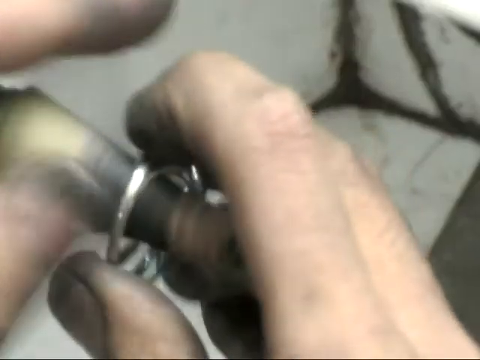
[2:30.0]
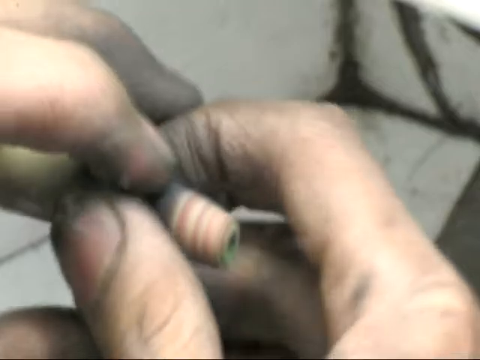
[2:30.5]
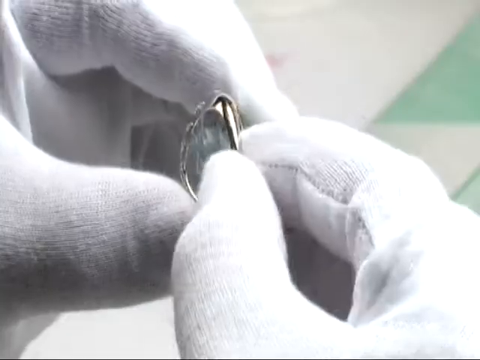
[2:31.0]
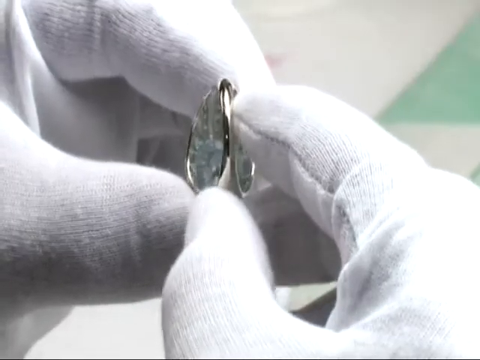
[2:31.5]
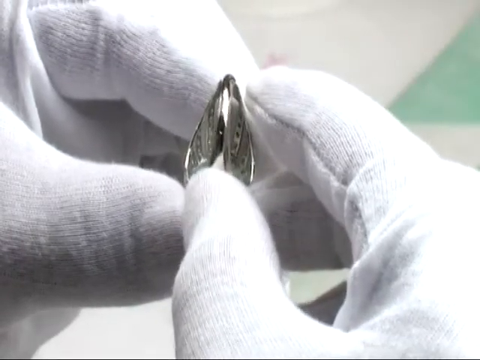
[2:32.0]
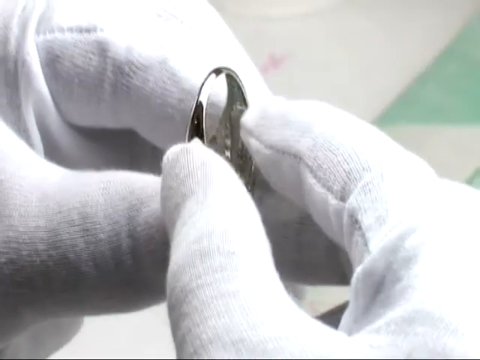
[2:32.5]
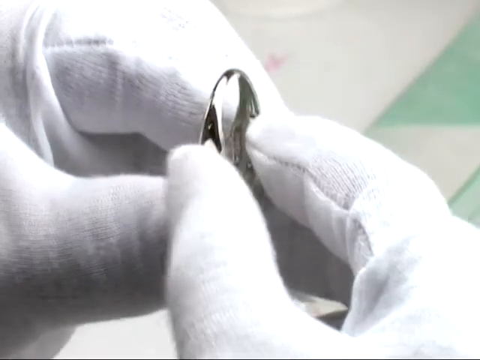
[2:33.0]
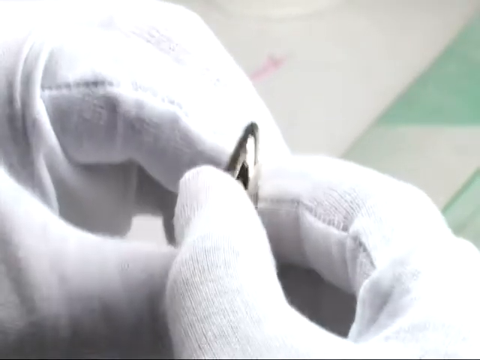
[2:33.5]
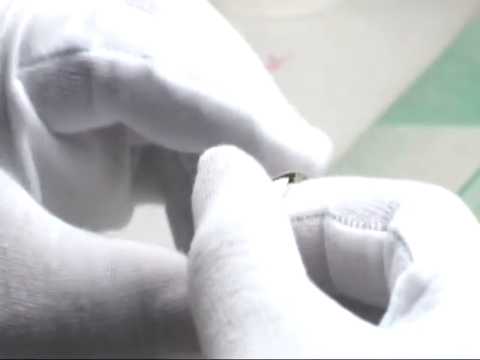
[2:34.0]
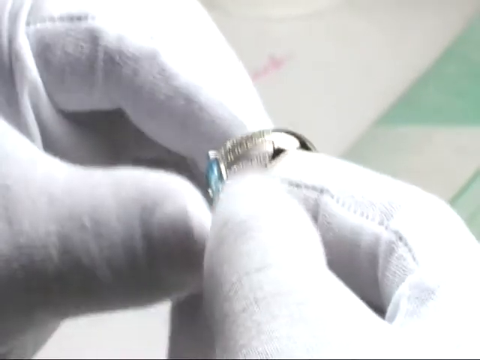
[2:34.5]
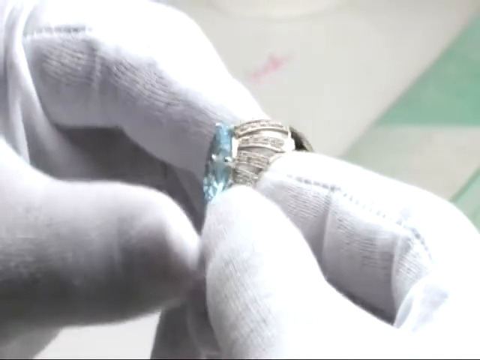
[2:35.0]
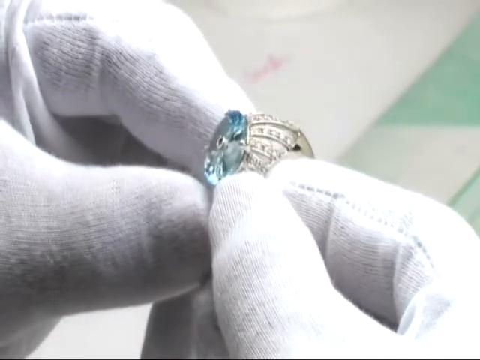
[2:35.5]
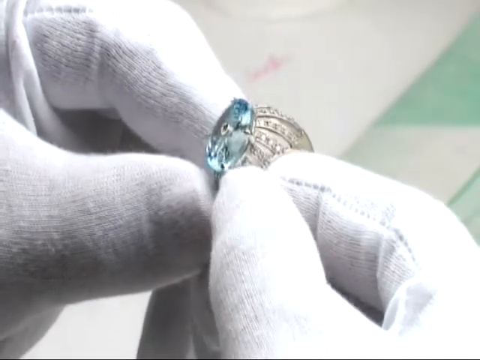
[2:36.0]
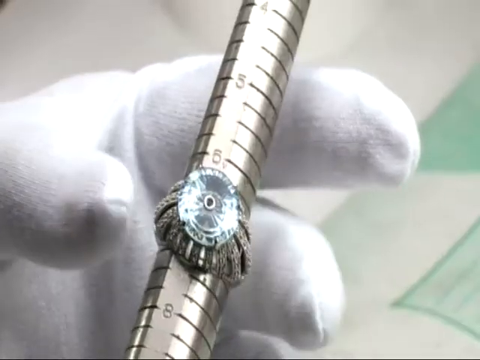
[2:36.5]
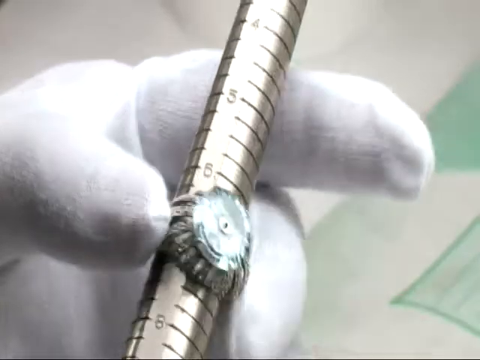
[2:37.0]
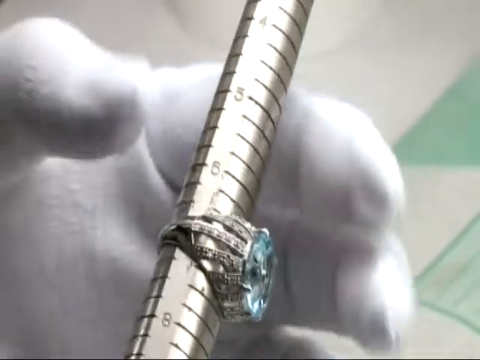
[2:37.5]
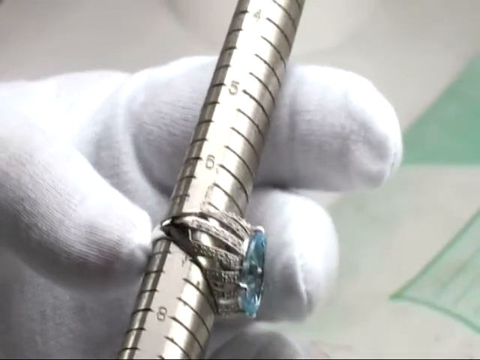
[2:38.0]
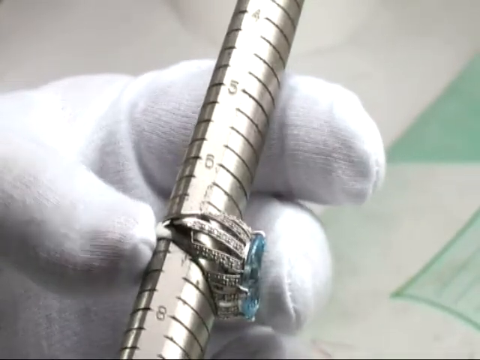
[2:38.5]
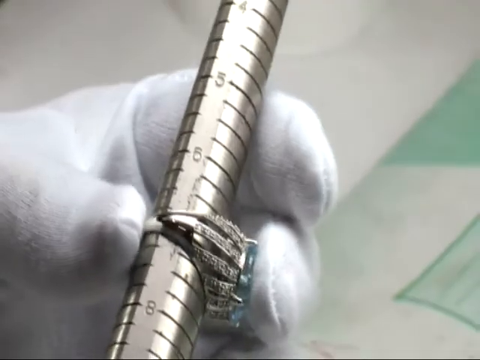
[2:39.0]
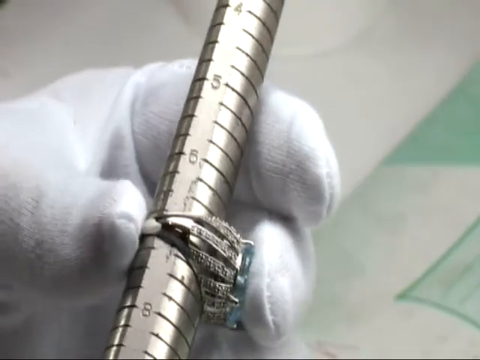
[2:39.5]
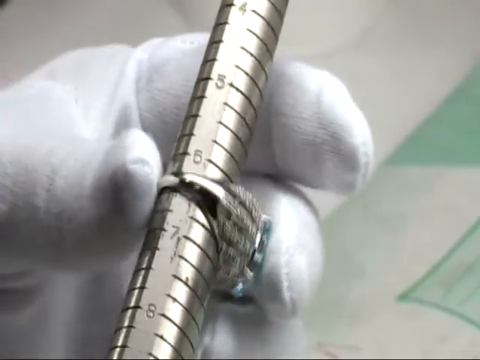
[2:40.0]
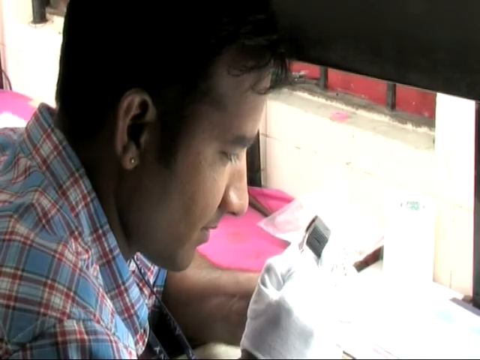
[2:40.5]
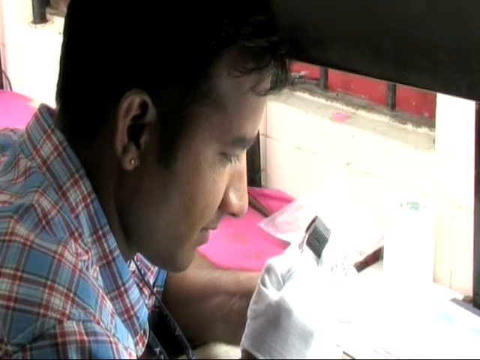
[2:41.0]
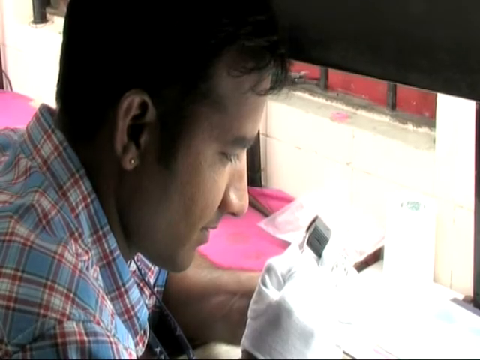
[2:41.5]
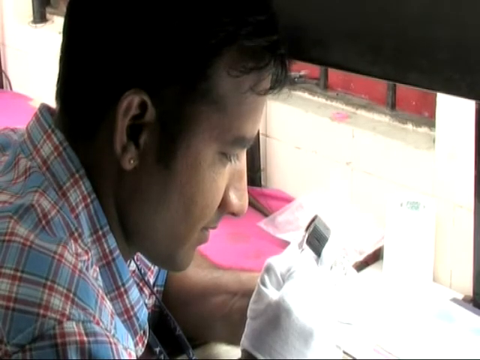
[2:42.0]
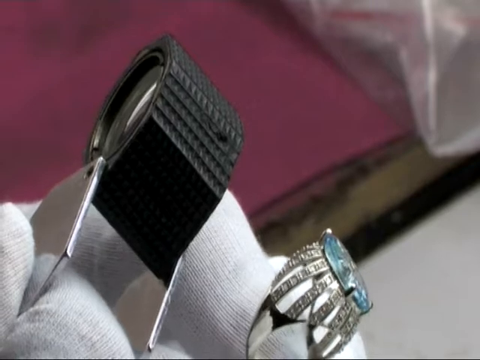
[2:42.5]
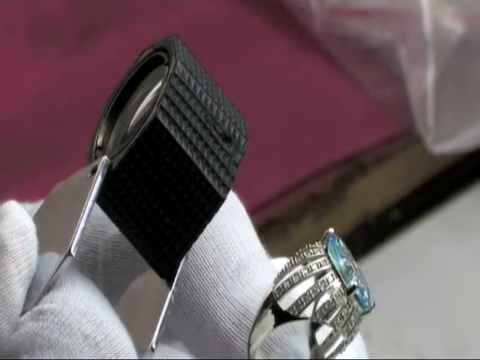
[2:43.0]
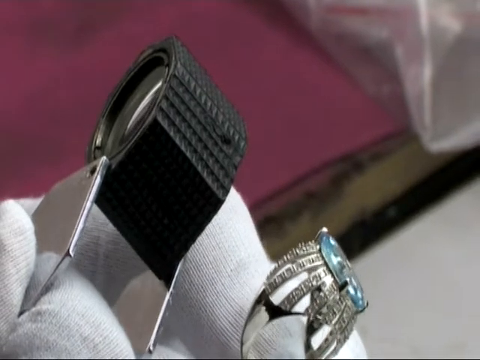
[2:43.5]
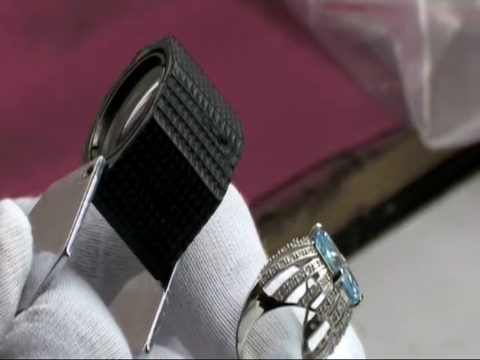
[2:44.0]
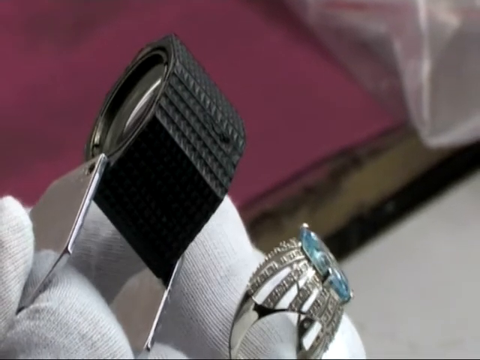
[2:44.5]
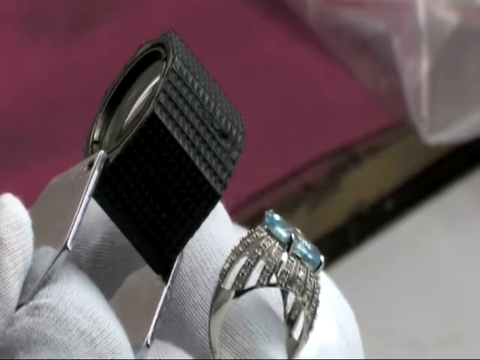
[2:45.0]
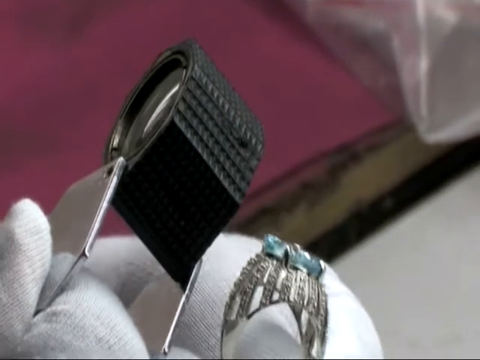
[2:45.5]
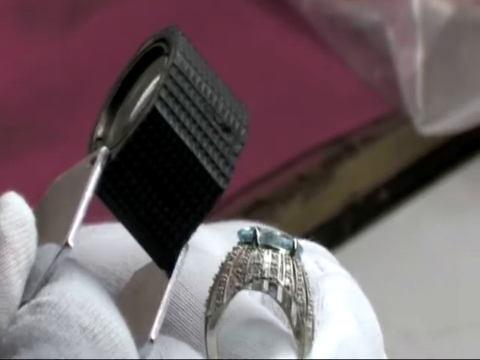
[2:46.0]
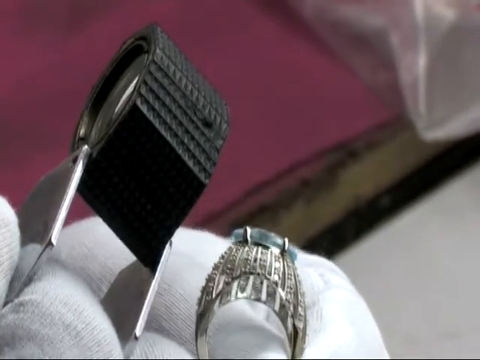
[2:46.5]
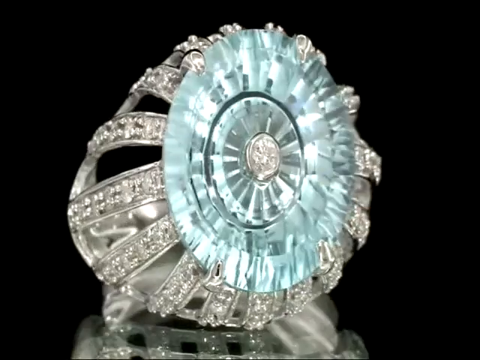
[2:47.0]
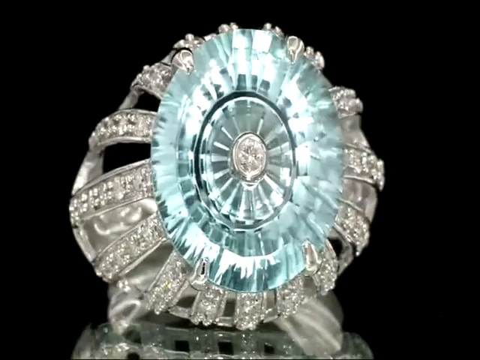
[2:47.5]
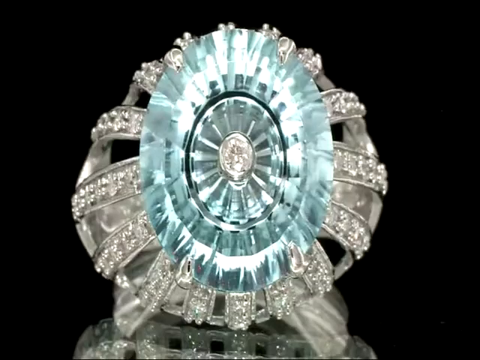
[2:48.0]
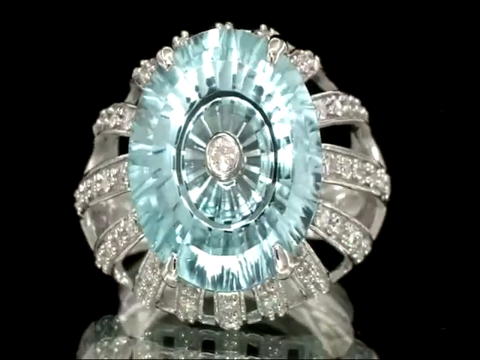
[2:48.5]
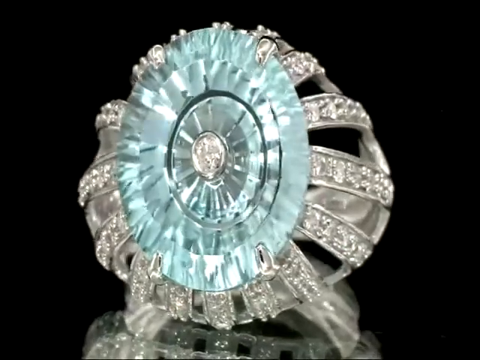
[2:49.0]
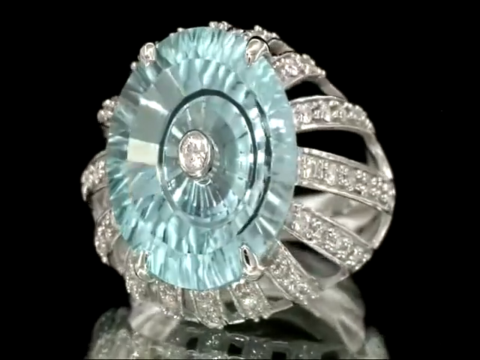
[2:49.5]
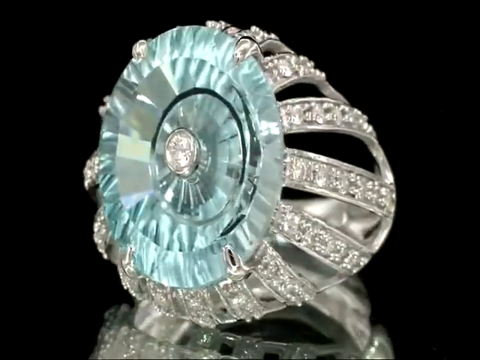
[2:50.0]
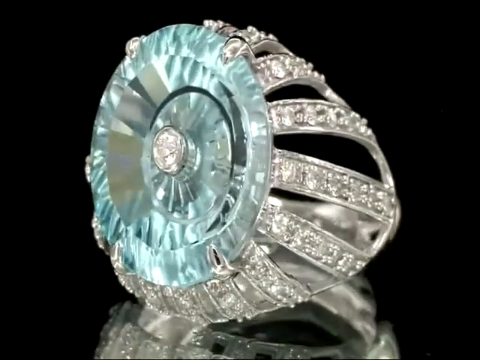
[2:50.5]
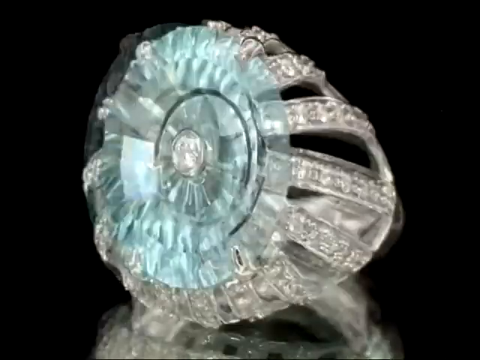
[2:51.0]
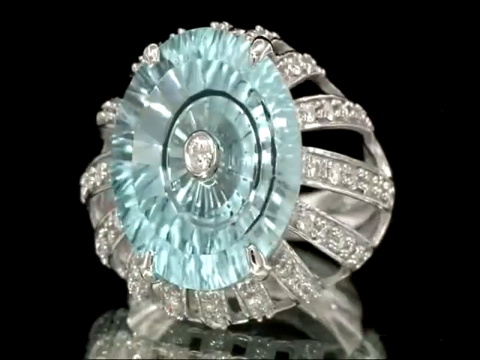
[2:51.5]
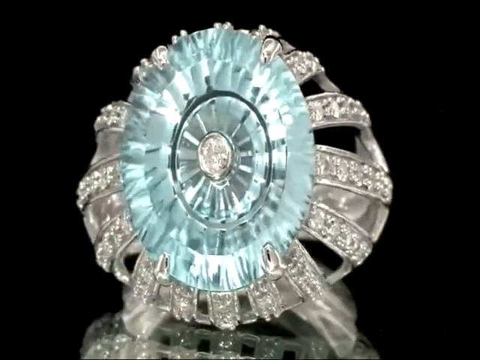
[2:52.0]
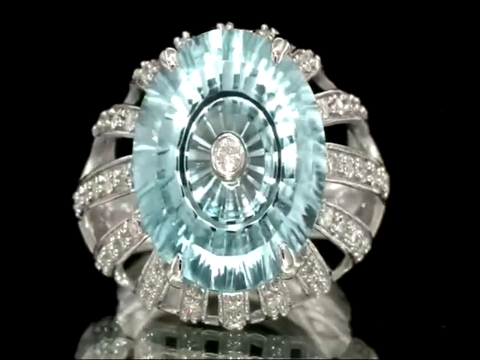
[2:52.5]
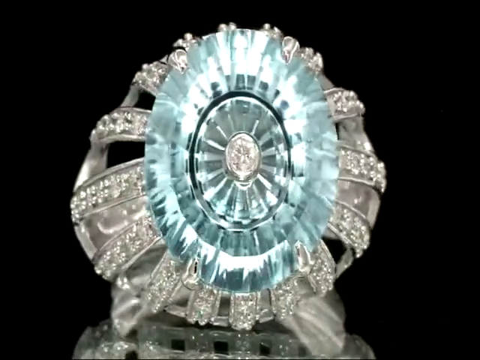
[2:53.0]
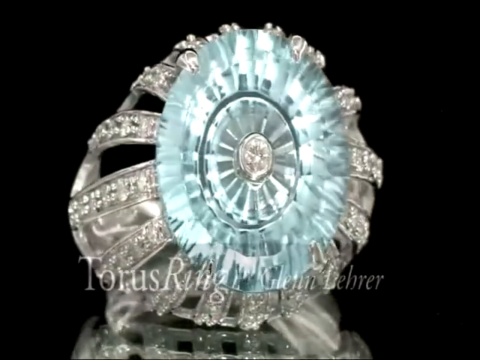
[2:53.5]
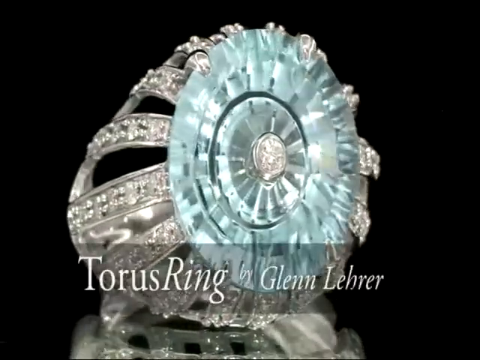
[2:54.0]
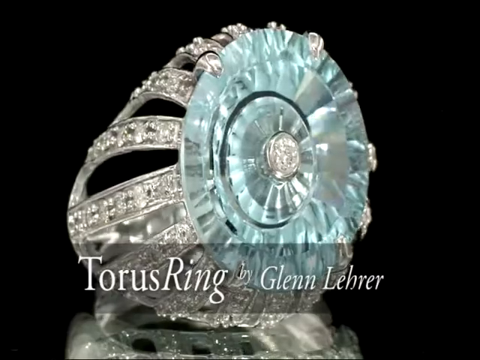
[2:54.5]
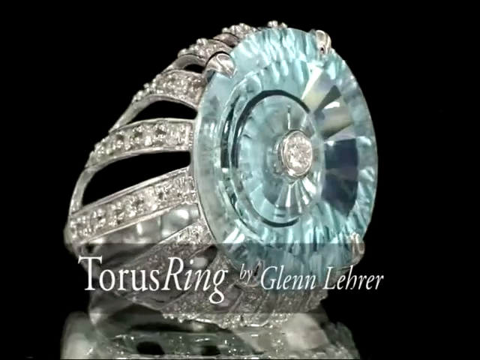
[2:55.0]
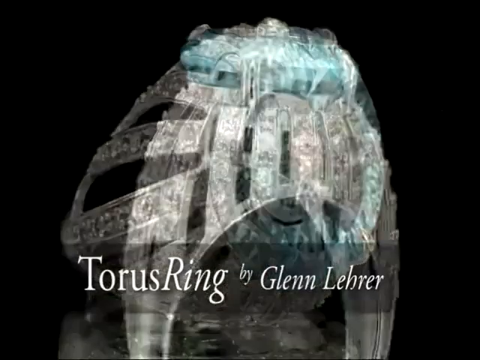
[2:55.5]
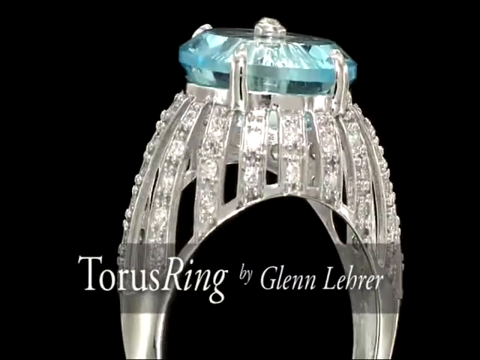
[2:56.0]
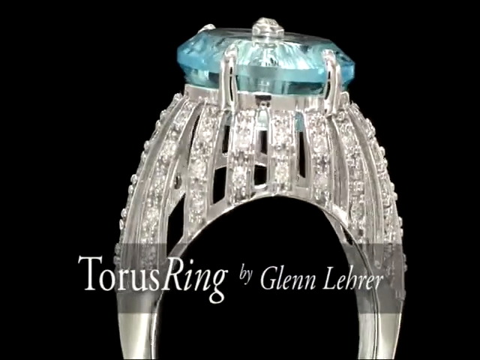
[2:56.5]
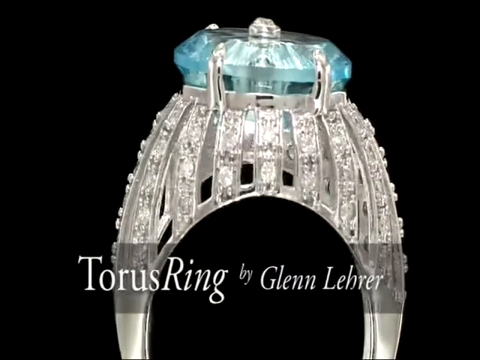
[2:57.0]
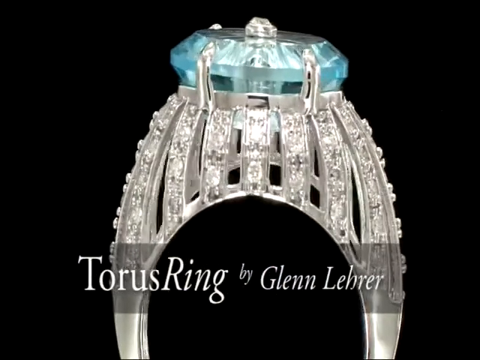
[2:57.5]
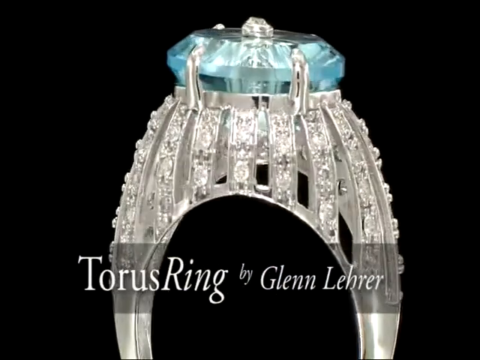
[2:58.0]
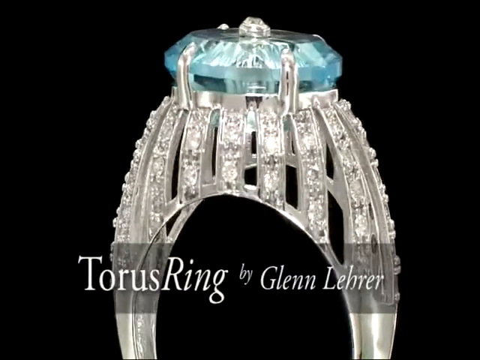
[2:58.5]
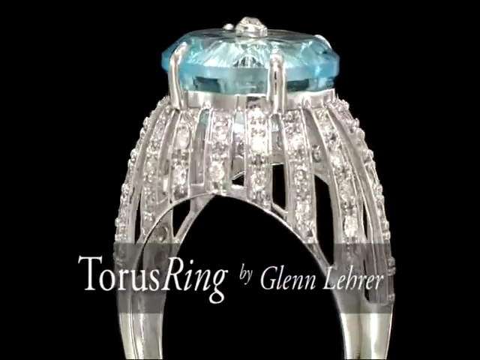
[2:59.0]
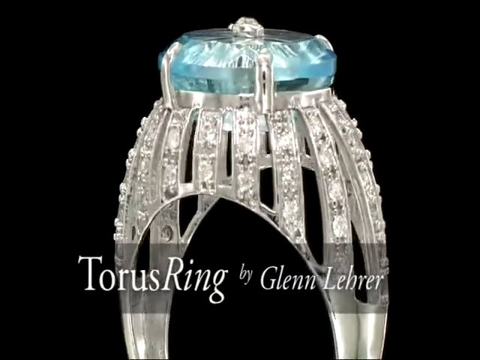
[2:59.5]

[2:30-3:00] The Taurus ring by Glenn Lira is a nine carat ring with a light blue type of diamond in the middle, and its band, which goes around the finger, is filled with a lot of silver and many tiny jewels. The plans for the ring's design are drafted, and as the camera zooms out, the ideas are seen to be put together on a laptop. A man appears to be putting the ring together, with small tools for placing the diamonds on the ring and some special glue. A grinding tool seems to be smoothing out the inside of the ring.